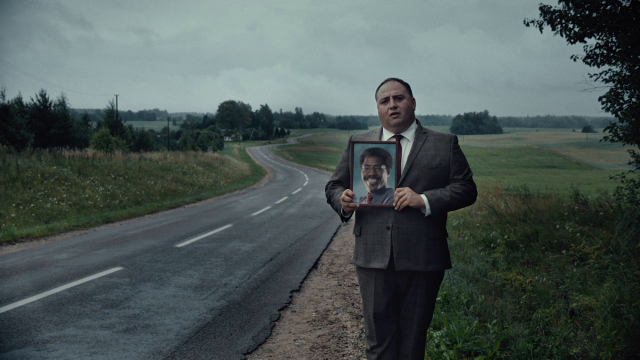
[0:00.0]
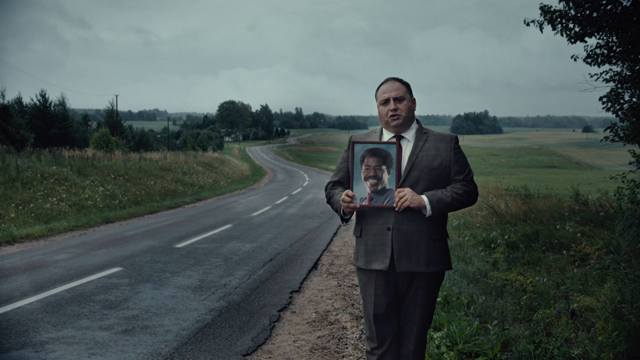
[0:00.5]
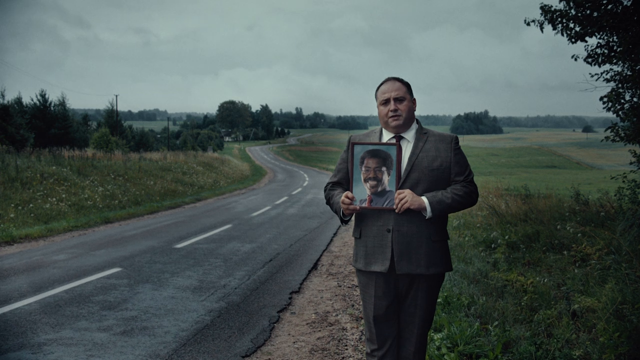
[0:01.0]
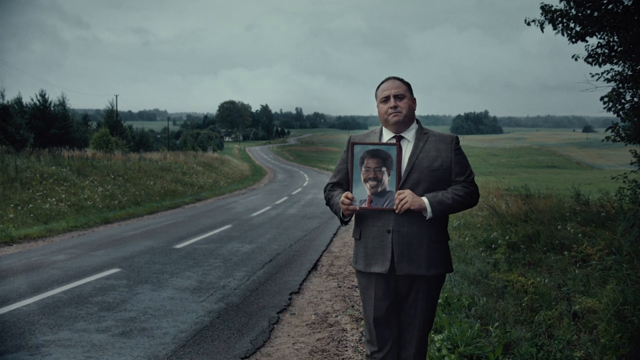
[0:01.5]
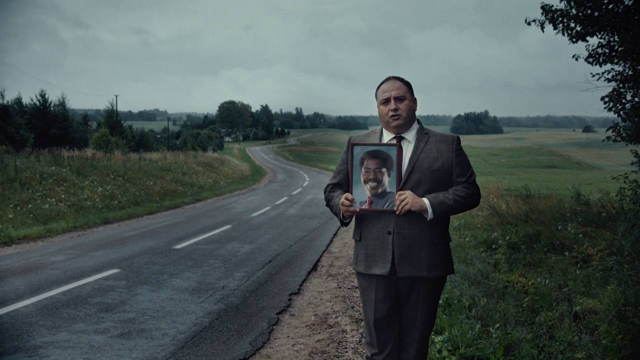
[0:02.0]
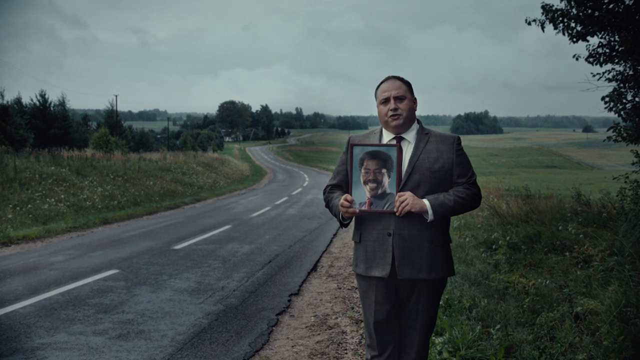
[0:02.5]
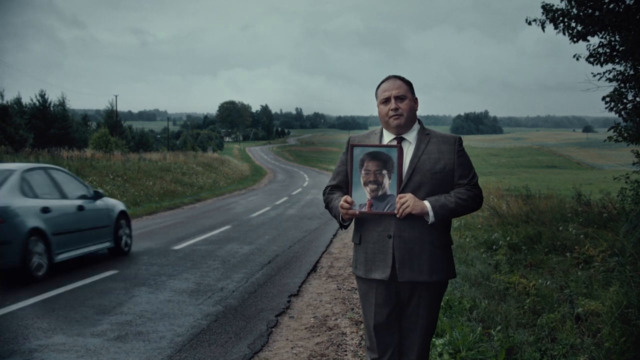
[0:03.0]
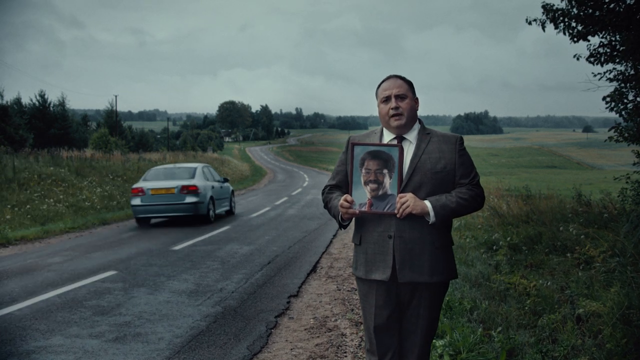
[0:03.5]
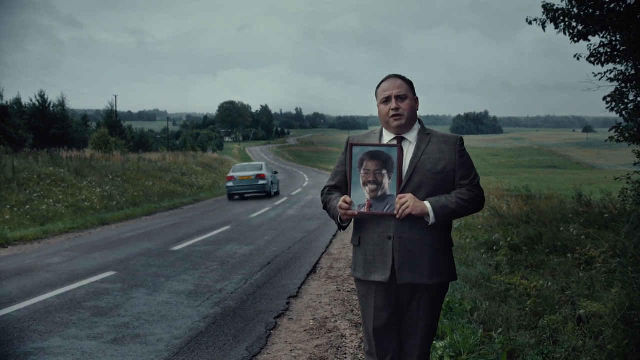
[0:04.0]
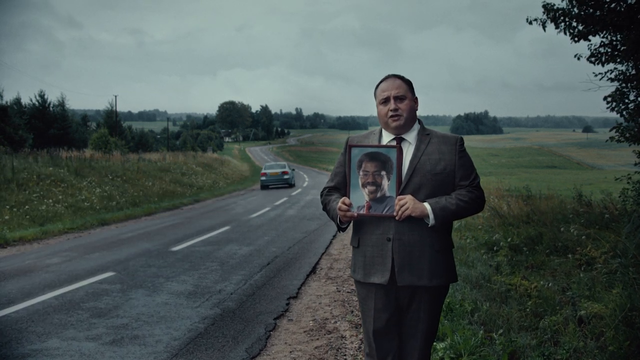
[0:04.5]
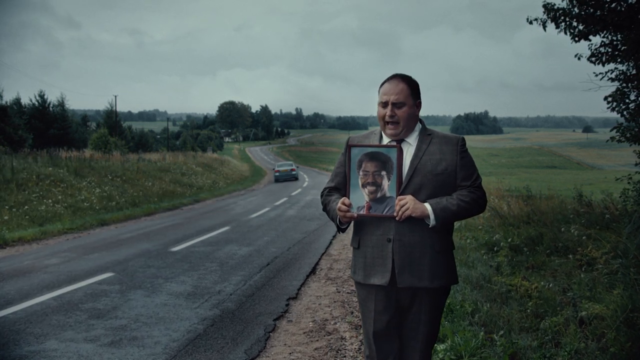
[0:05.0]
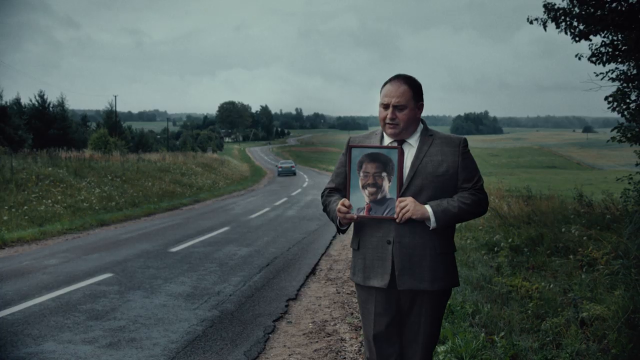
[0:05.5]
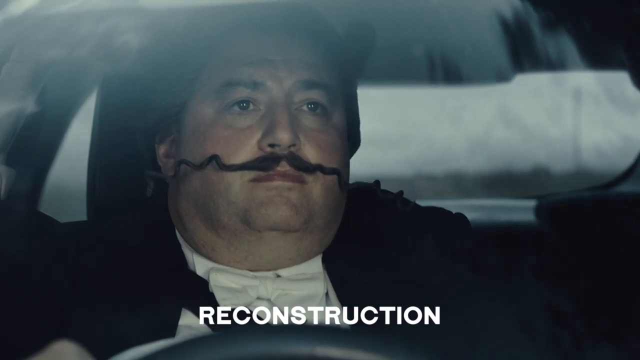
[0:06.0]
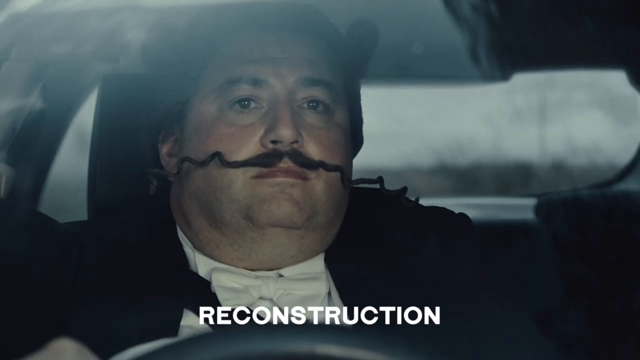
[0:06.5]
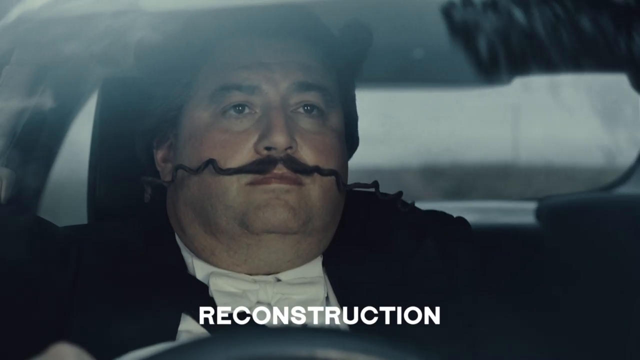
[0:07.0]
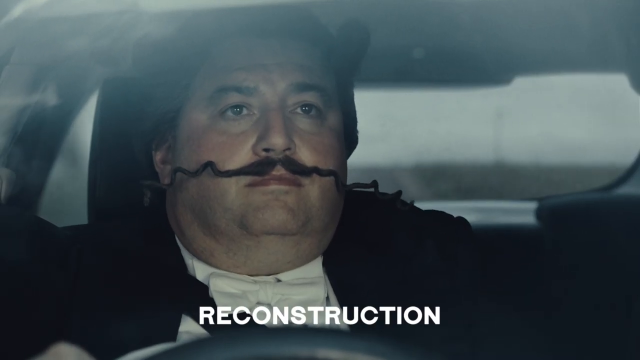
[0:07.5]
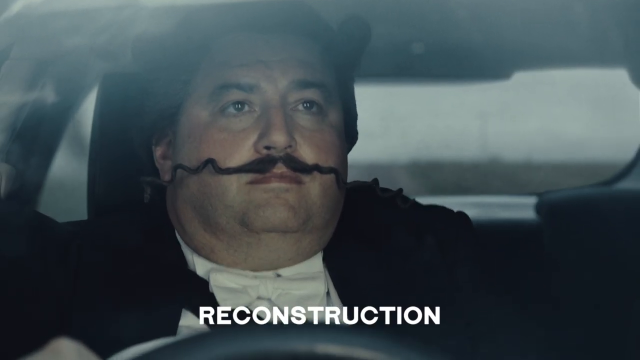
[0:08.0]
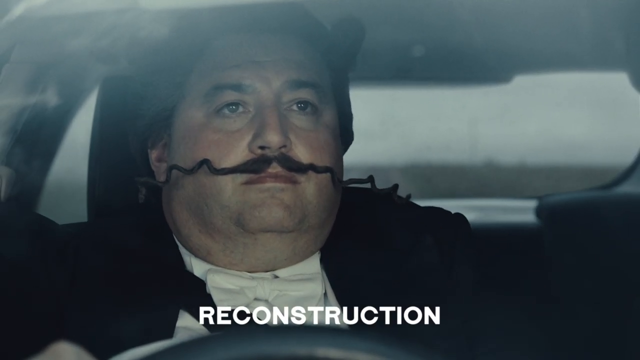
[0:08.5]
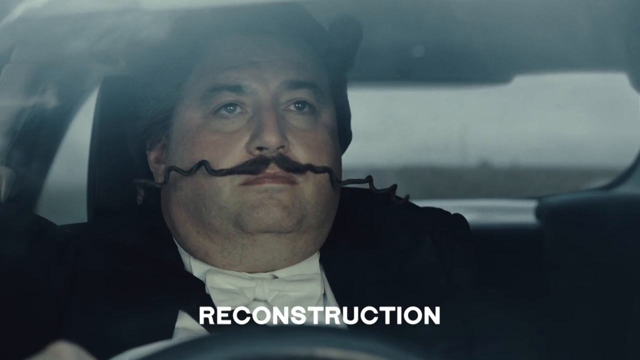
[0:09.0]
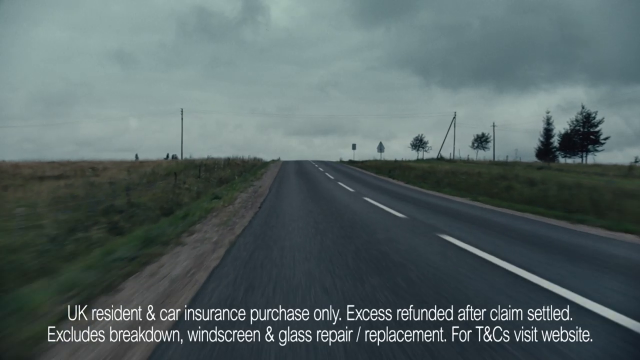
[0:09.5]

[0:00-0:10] This is an ad. A somewhat portly man stands on the side of a road that has a curve in it, holding a portrait of a black man. The video switches to another shot of a road, and text underneath reads "UK resident and car insurance purchase only. Excess refunded after claim settled. Excludes breakdown, windscreen, and glass repair/replacement for TNC's visit website," apparently the terms and conditions. The view is as if from inside a car, so the car itself is not visible, and the car drives further down the straight road.